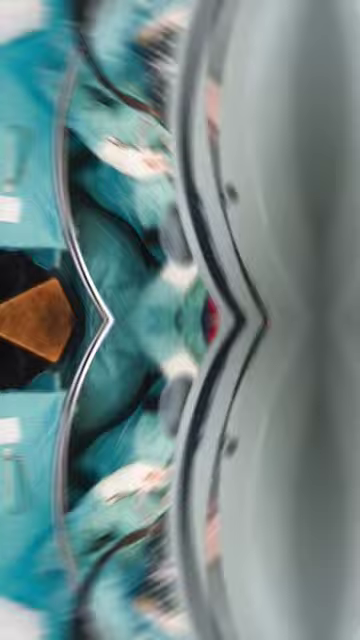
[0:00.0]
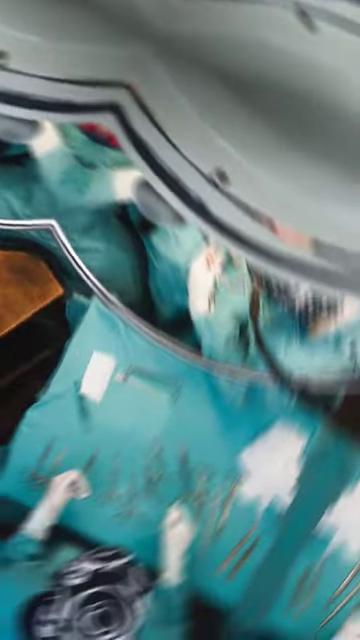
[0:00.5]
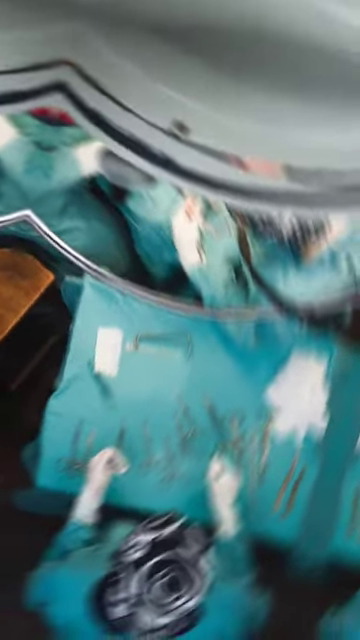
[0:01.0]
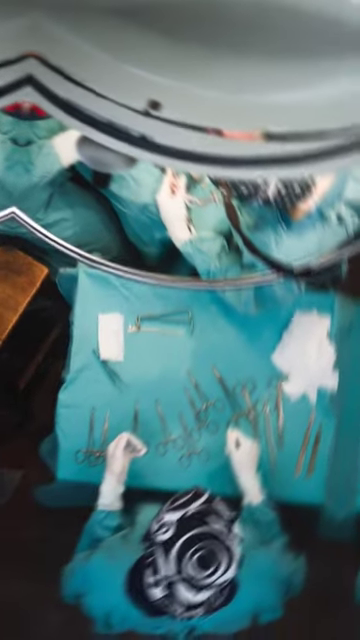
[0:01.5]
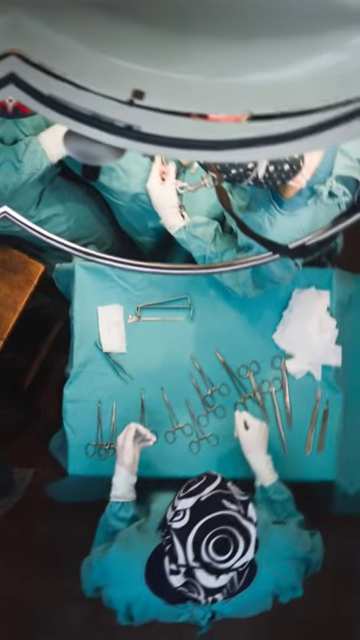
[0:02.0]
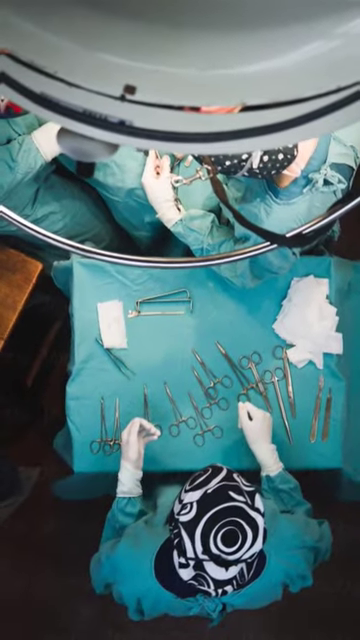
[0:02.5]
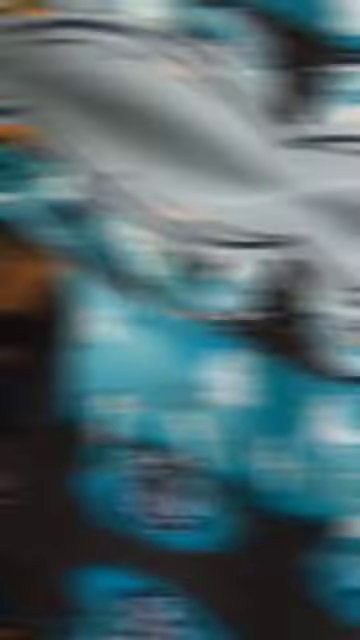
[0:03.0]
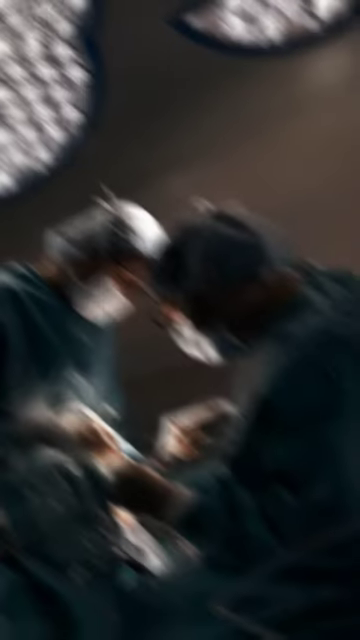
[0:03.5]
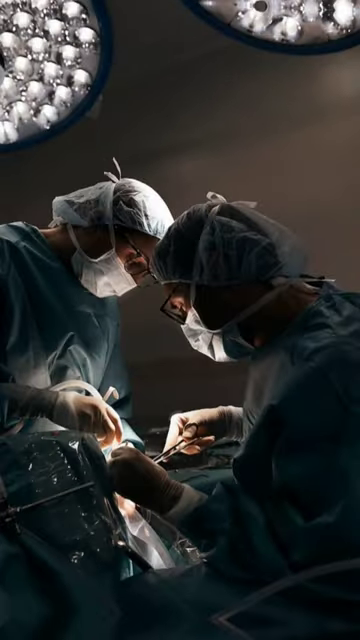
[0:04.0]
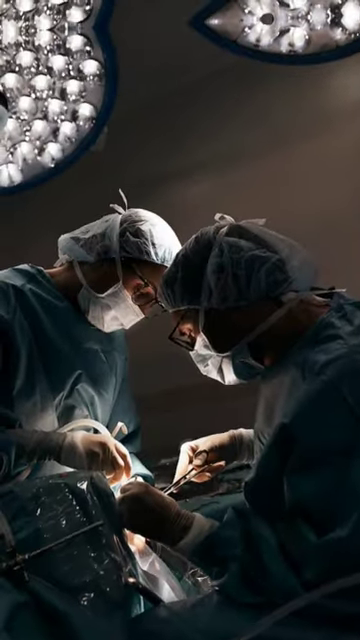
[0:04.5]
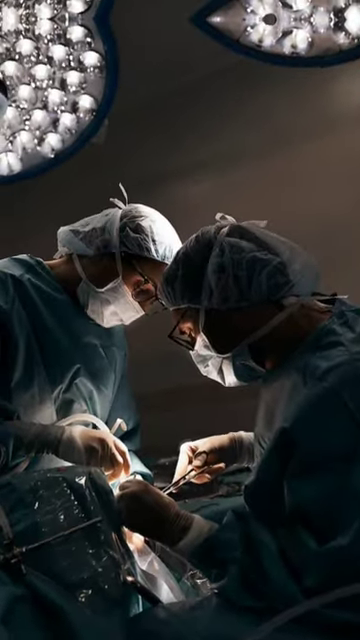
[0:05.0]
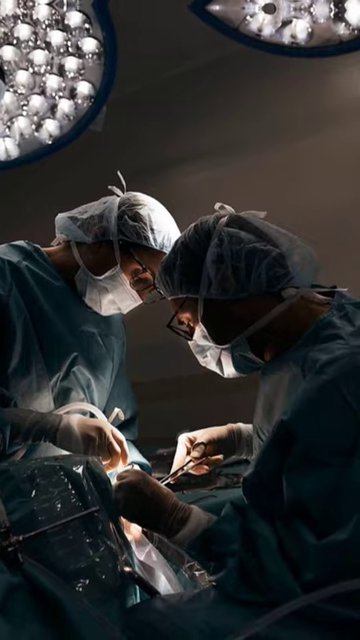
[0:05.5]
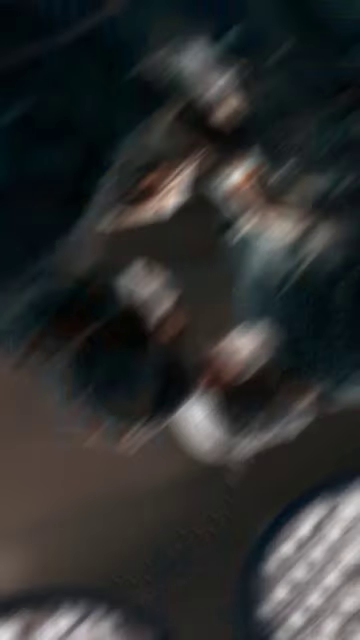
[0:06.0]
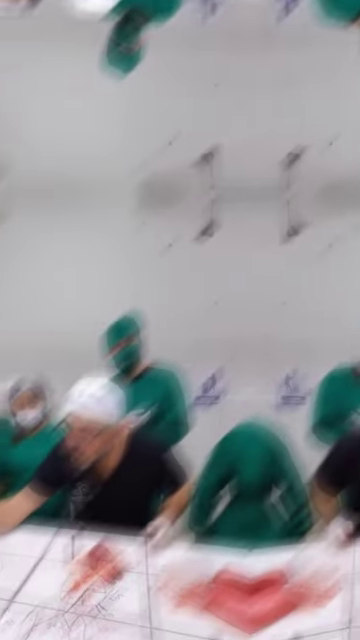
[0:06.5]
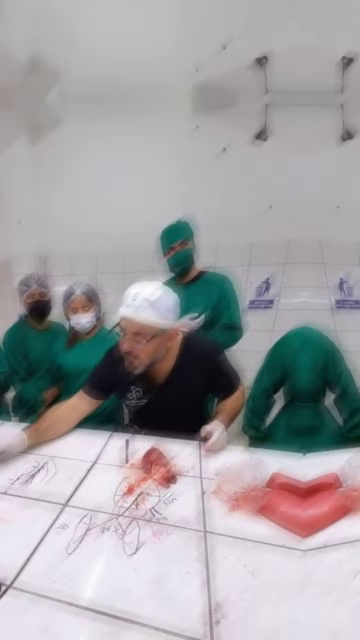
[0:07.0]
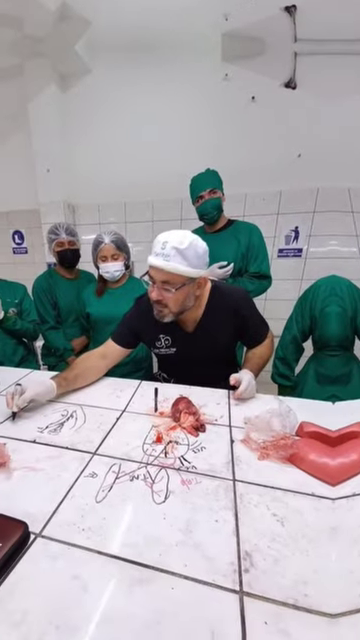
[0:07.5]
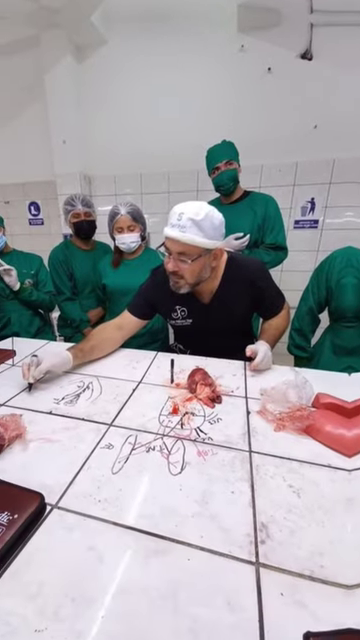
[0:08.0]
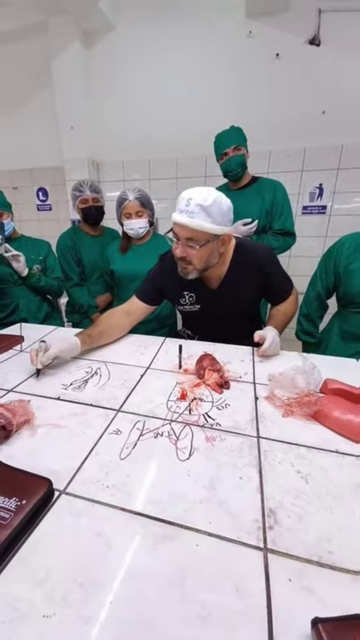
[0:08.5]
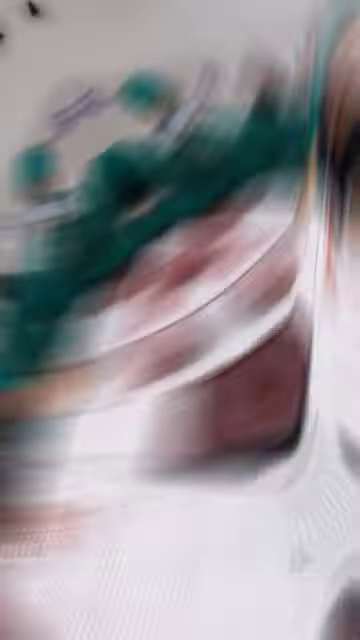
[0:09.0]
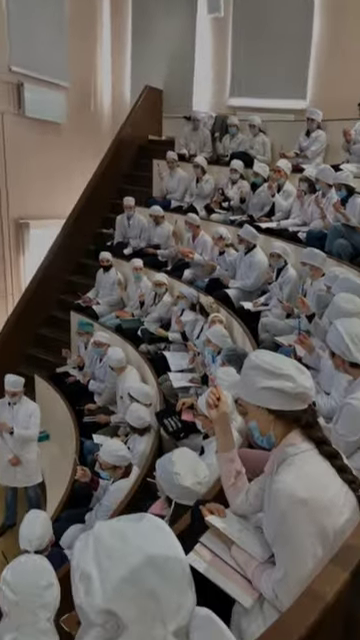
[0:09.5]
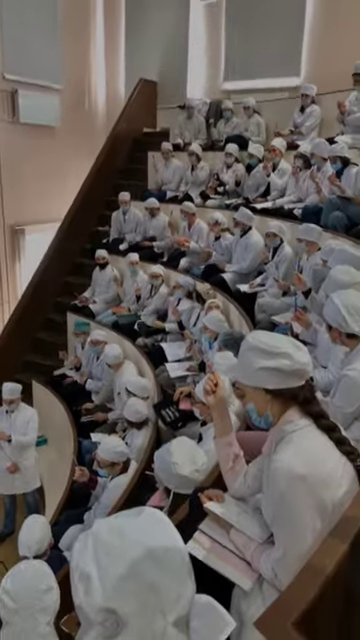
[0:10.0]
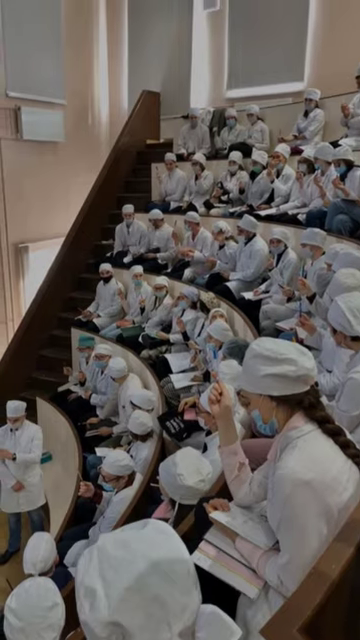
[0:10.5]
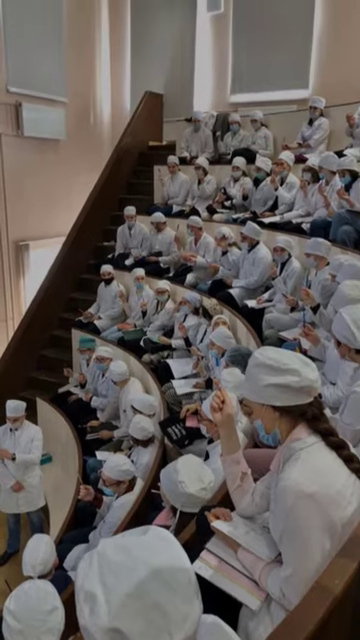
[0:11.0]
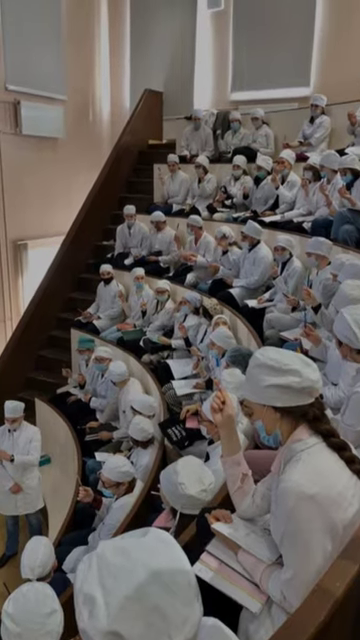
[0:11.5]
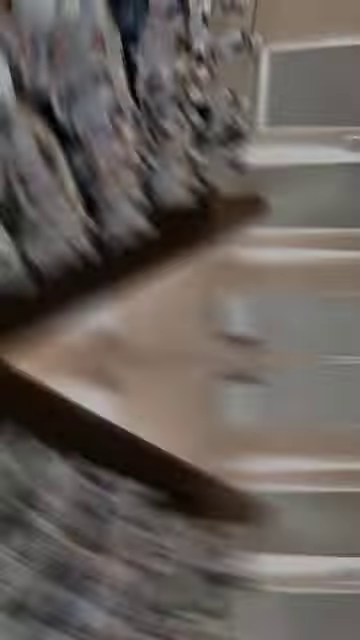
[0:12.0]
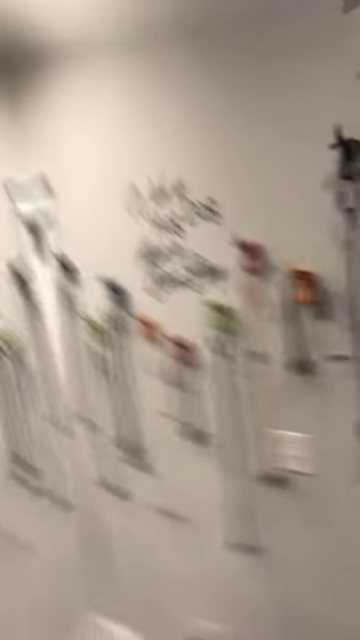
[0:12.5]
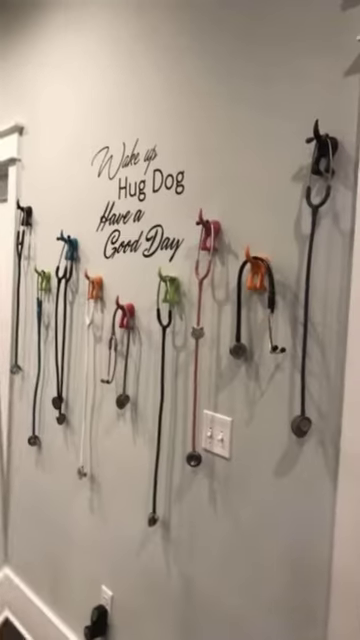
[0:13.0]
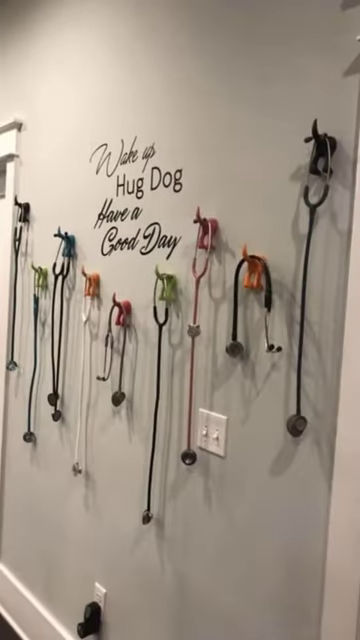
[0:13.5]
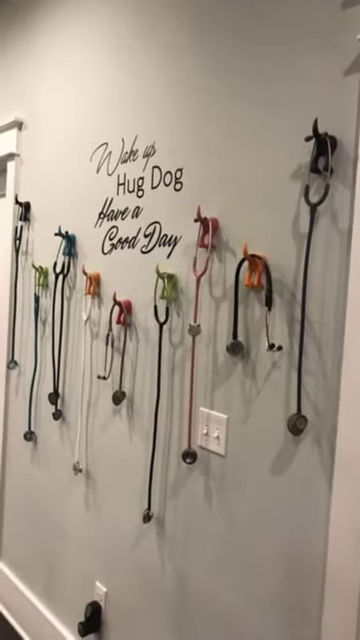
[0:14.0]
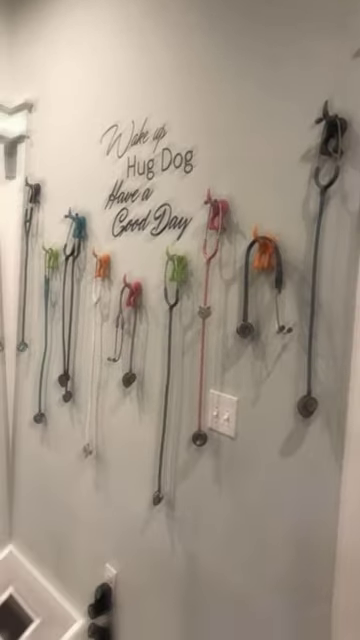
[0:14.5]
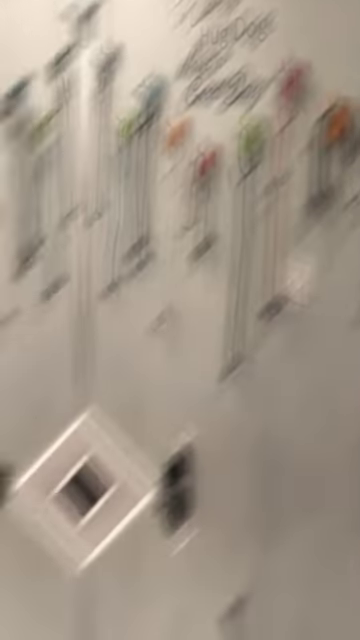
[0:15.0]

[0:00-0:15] The video starts off spinning around; at first it looks like some sort of big university, but that is not what it is. Suddenly a blue, aqua table appears, and the camera zooms in on it from the top, showing an aqua-colored table covering and many surgical tools, so it is some sort of operating table. From the top, a doctor or surgeon is also visible, wearing white gloves, green scrubs and something on their head. The movement then kind of stops, and a couple of doctors are seen cutting, along with a bunch of other doctors. The video ends with a bunch of people in some sort of class. It looks like they are vets, since the text at the end says "wake up, hug a dog, have a good day."